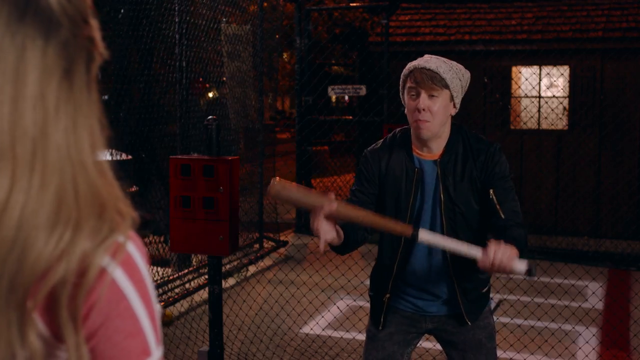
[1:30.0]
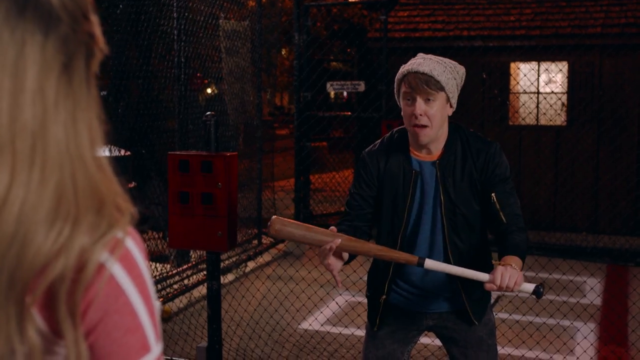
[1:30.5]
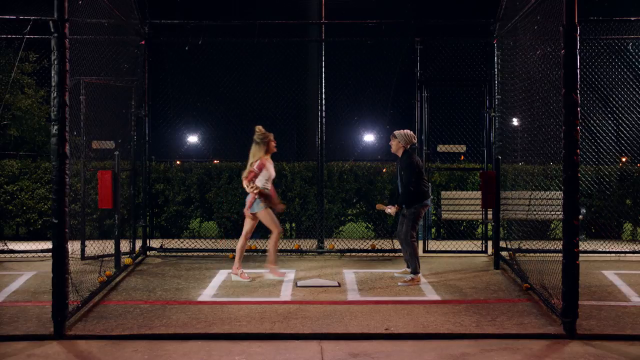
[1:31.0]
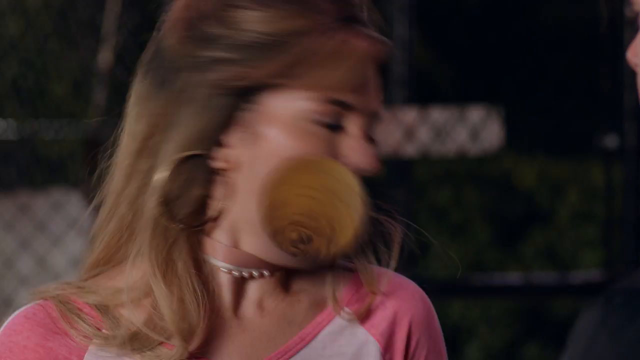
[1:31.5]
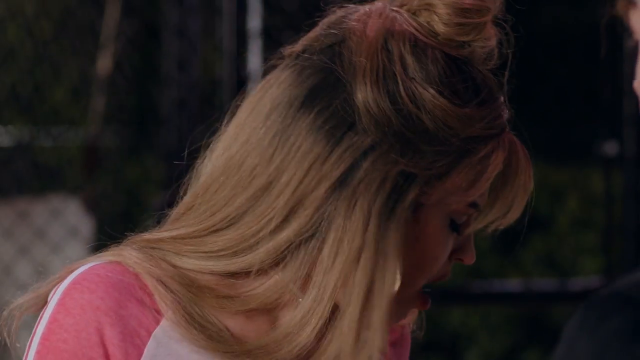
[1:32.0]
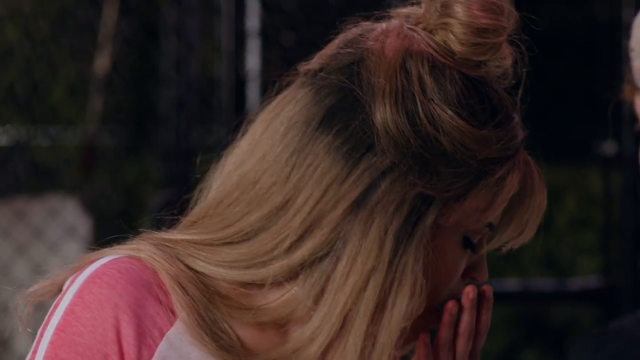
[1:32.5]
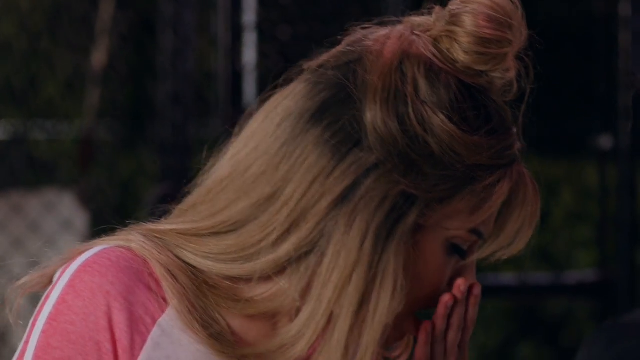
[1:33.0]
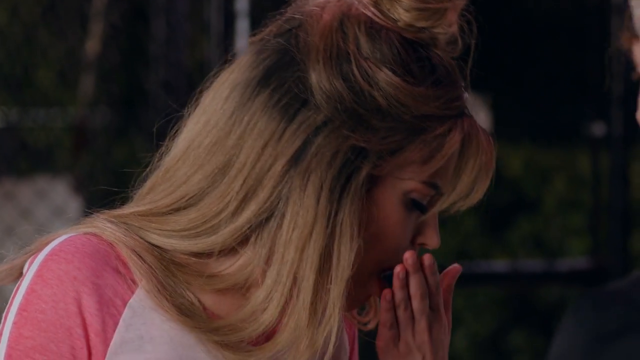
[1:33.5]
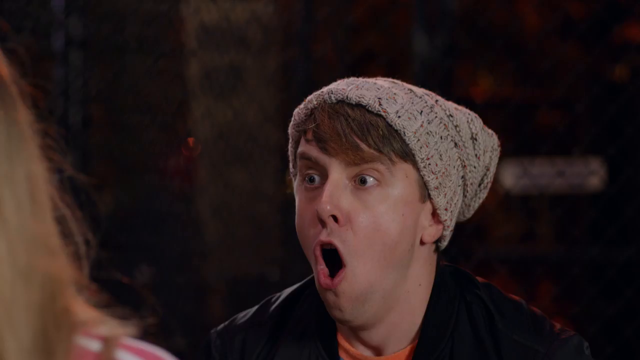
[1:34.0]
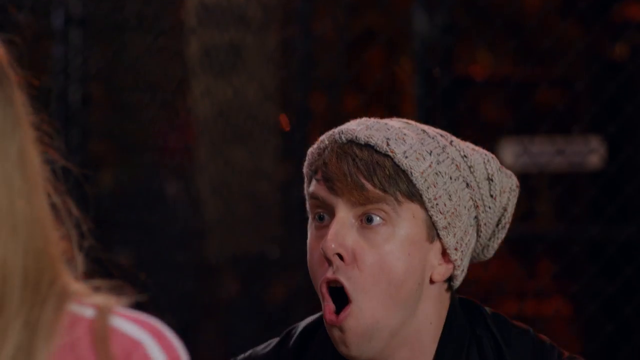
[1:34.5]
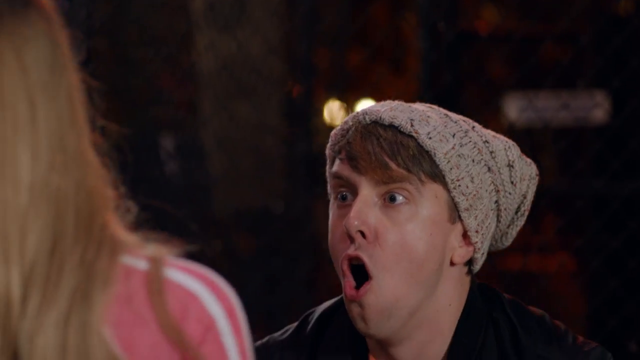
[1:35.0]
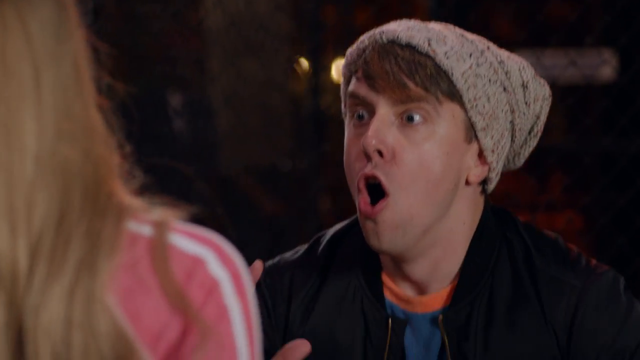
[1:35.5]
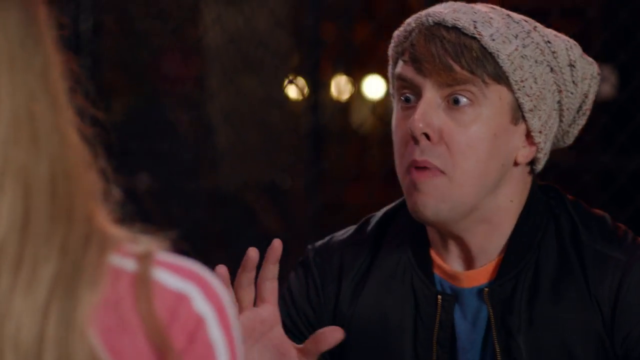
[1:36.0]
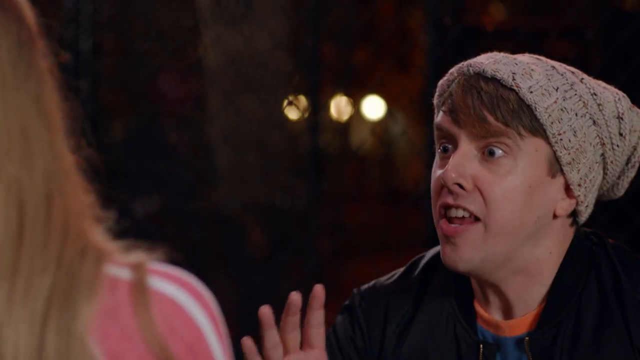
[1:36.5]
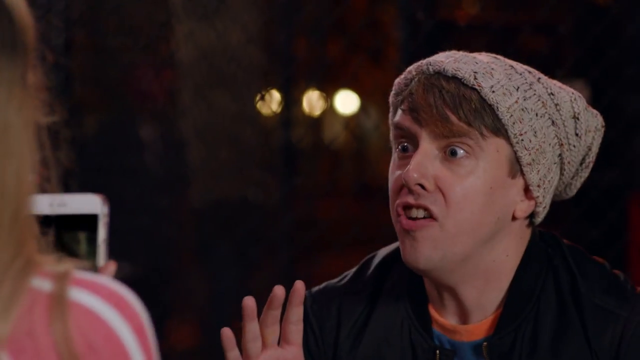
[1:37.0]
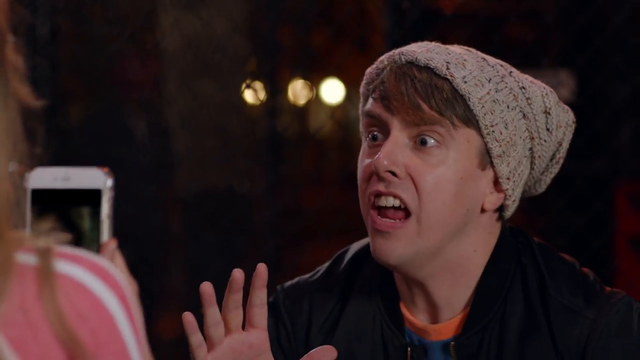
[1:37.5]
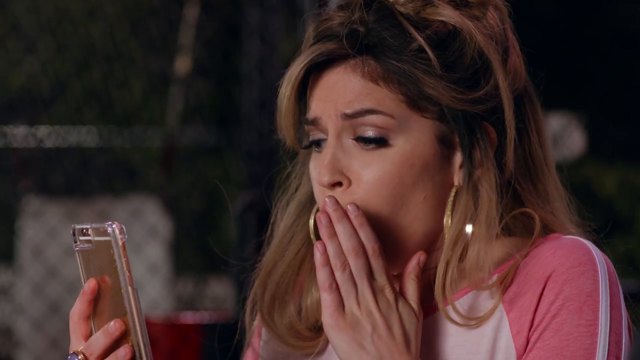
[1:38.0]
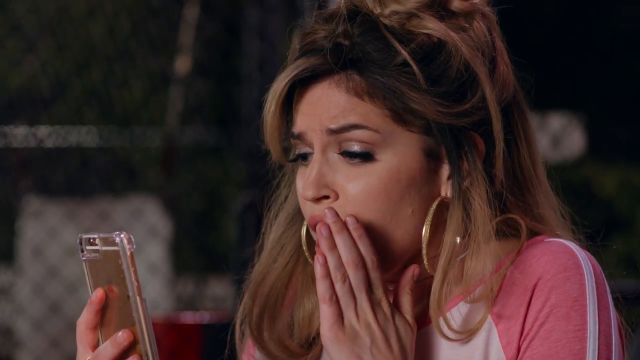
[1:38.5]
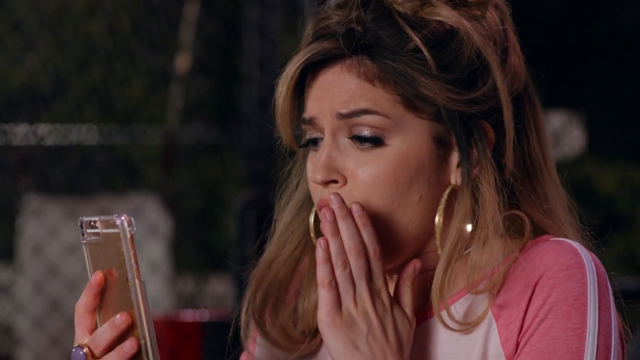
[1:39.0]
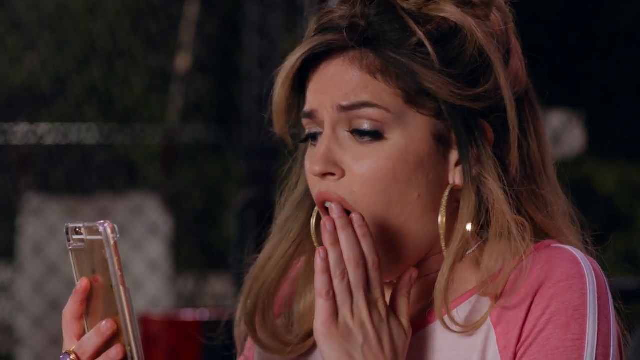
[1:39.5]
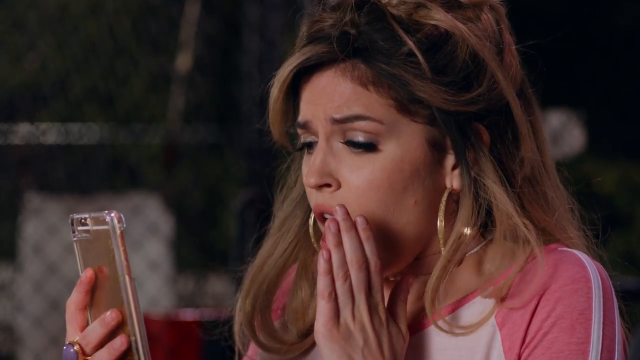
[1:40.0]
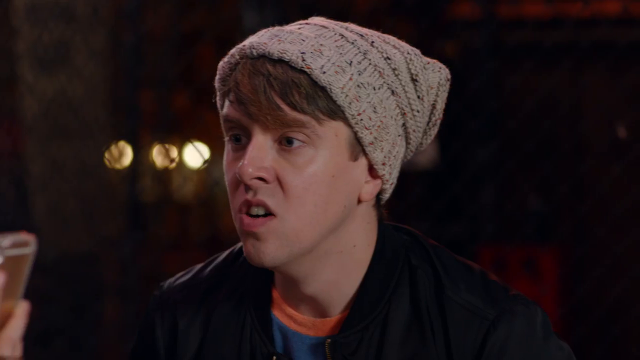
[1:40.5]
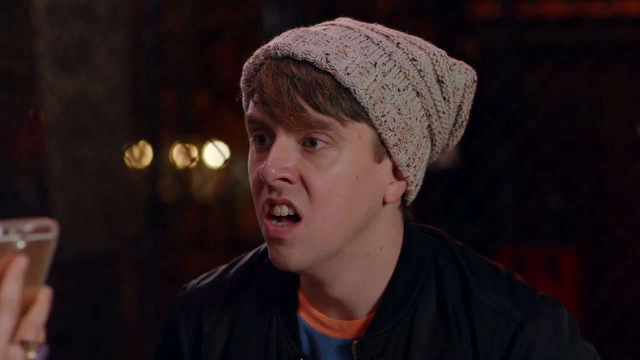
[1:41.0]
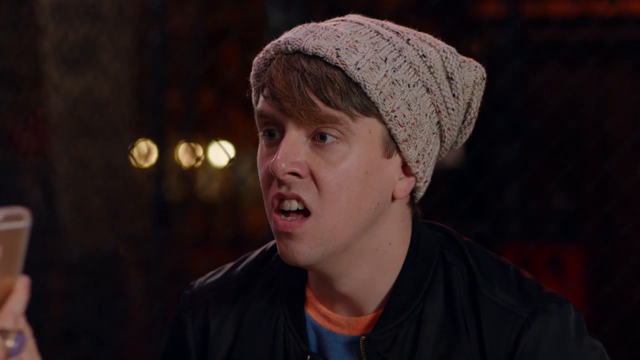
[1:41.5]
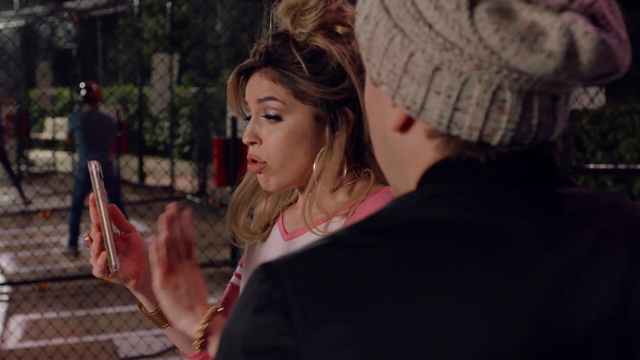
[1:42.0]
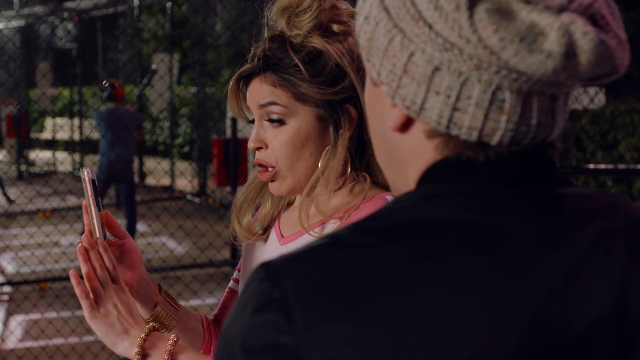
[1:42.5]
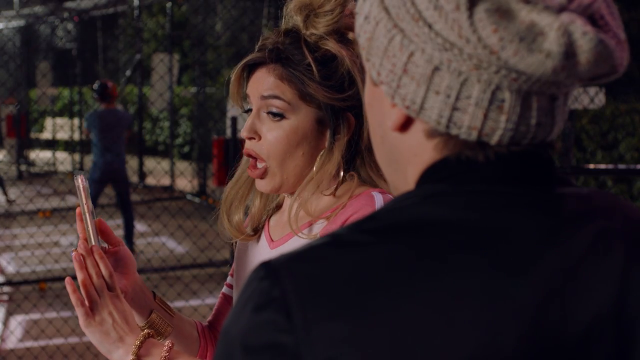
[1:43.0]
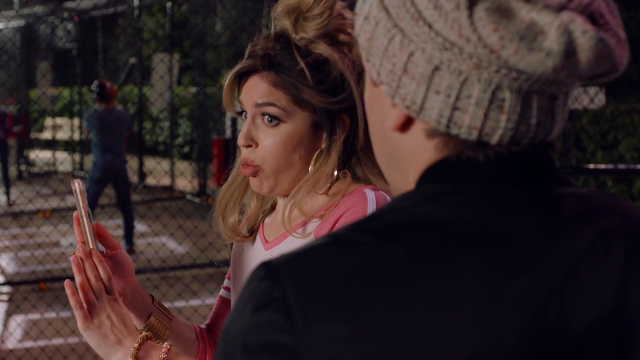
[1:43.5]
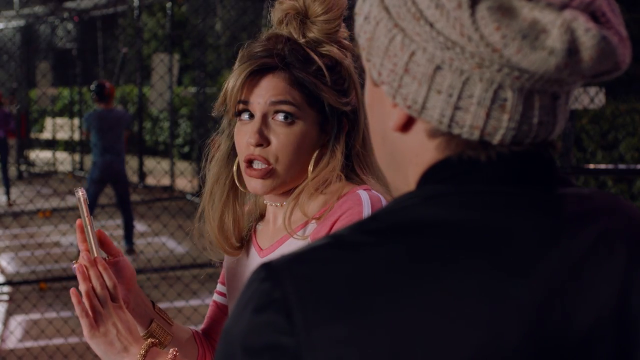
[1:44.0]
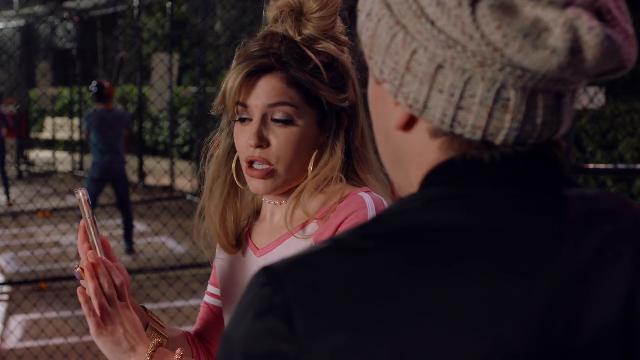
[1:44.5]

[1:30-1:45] A man holding a baseball bat shouts something in front of a black chain-link fence. The shot quickly jumps to a wide angle showing him standing in the batter's box of a batting cage, talking to a woman standing across from him. She wears a pink sporty top that looks like a three-quarter-sleeve baseball shirt, cut-off jeans, a purse tied around her waist with some fringe, and what look like pink sneakers, and she has blonde hair. They shout at one another. He holds a baseball bat and wears a gray winter hat, a bomber jacket, long pants and sneakers. It is night; a row of hedges, some floodlights and a park bench are in the background, and the chain-link fence of the cage is black. The woman approaches him, and as she approaches home plate she is hit in the head by a baseball. The shot cuts to her face as she holds her nose, then back to the man in the hat, who is shocked, upset and horrified and sort of doesn't know what to do; he tries to calm her down. She looks at her phone and then holds her hand over her mouth; maybe the ball hit her in the mouth or nose. She says something into the phone, then looks at the phone and then at him, very upset.